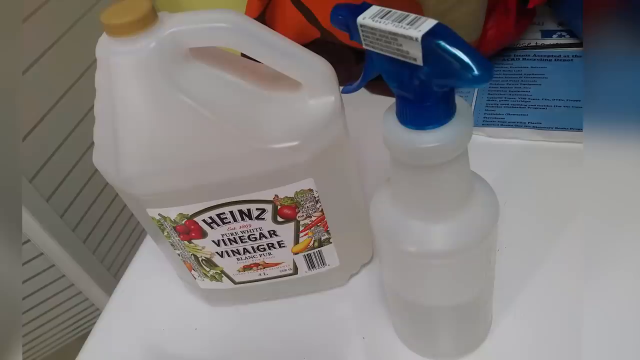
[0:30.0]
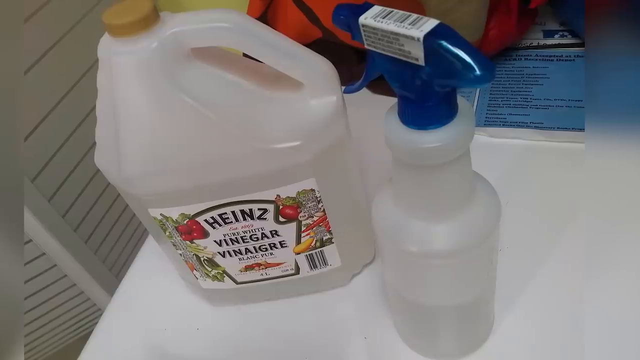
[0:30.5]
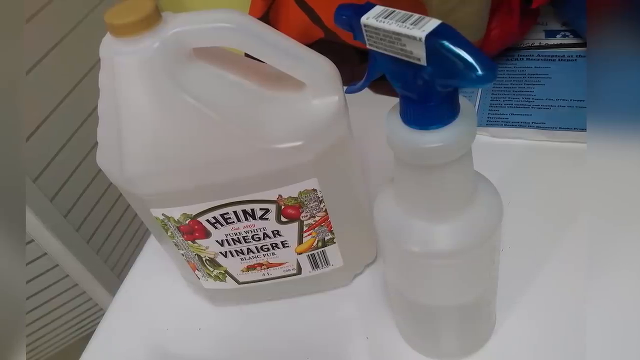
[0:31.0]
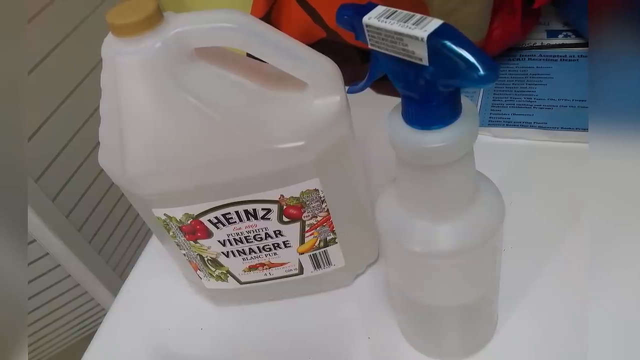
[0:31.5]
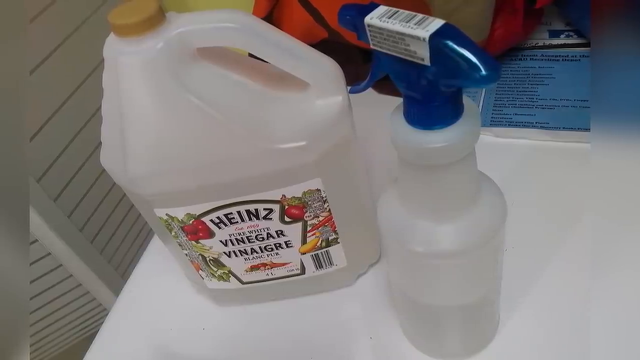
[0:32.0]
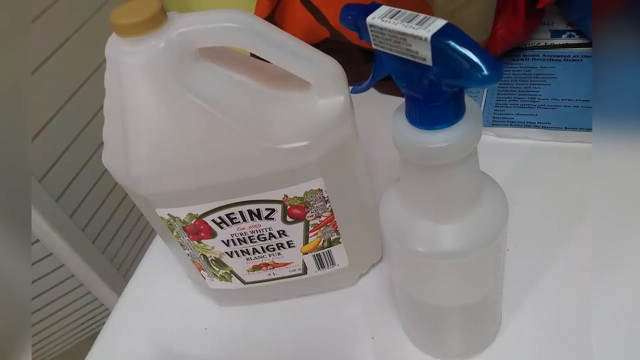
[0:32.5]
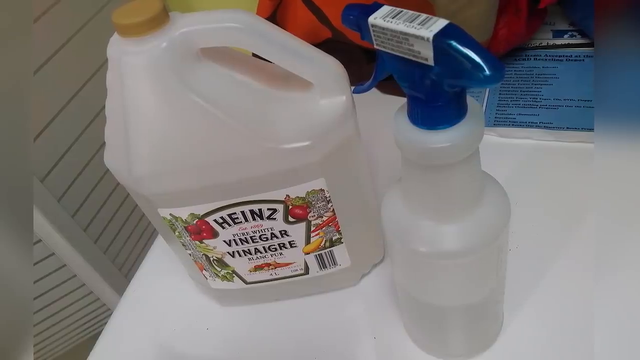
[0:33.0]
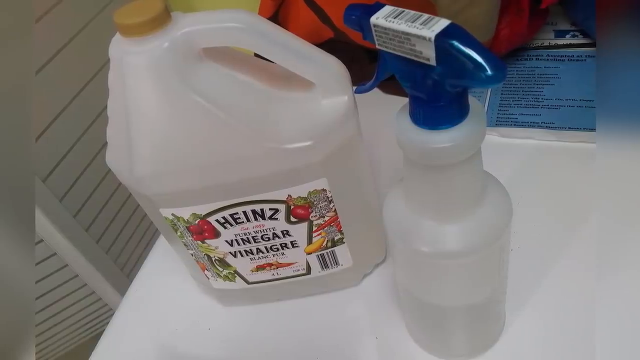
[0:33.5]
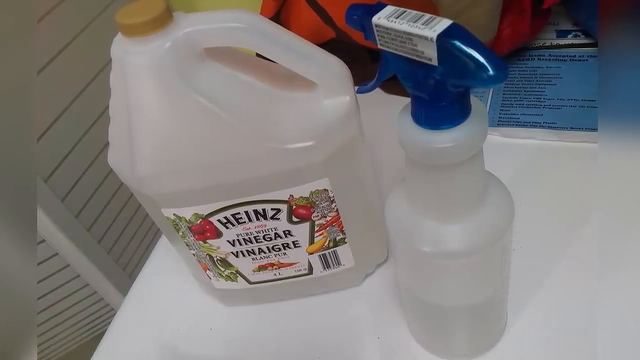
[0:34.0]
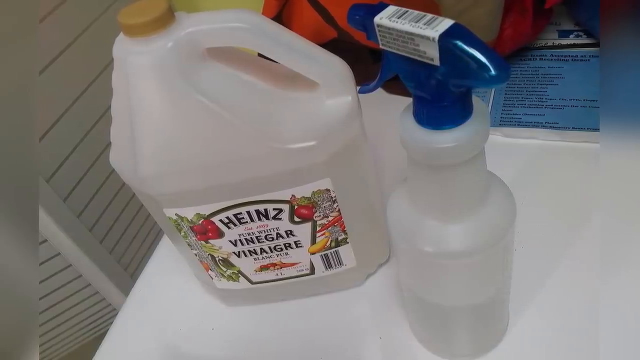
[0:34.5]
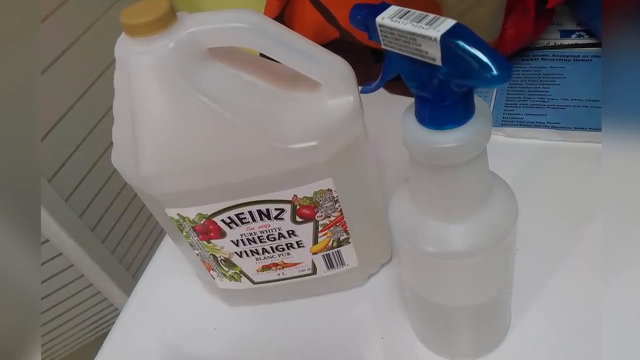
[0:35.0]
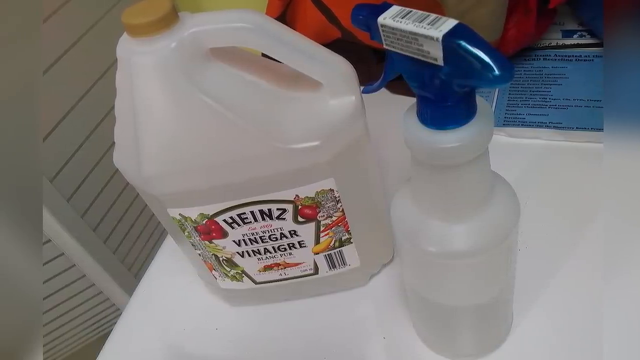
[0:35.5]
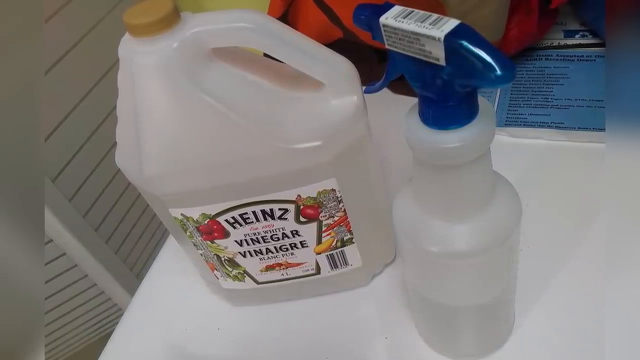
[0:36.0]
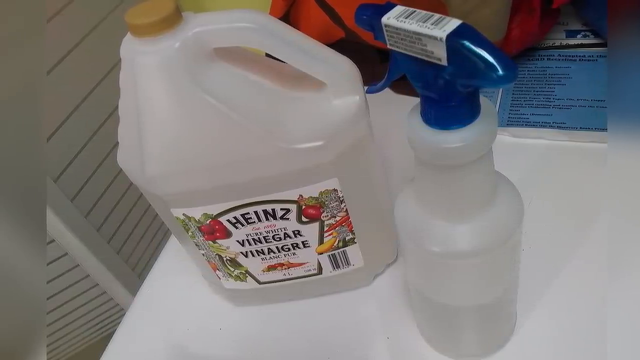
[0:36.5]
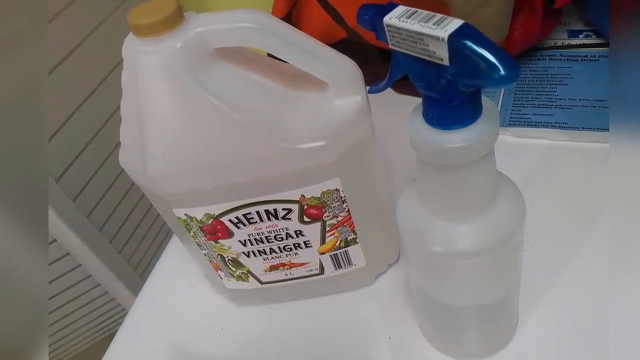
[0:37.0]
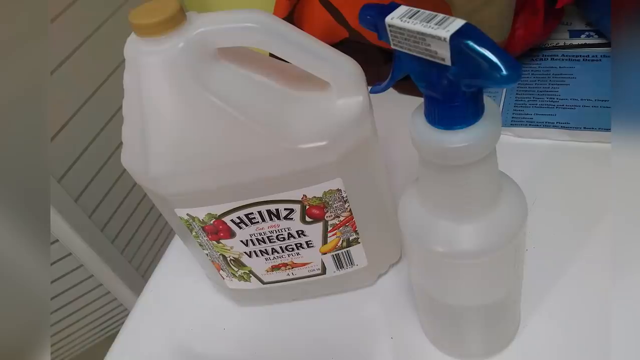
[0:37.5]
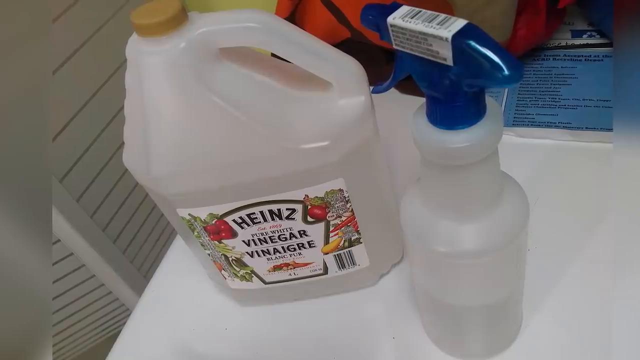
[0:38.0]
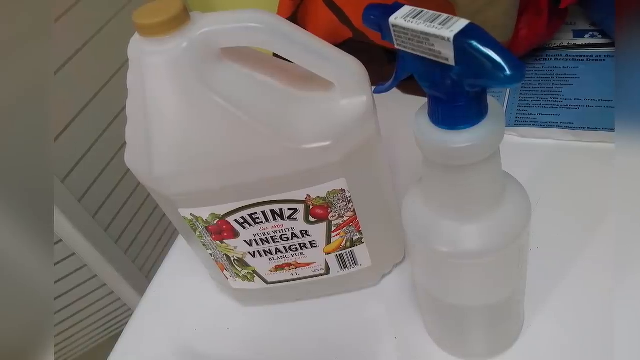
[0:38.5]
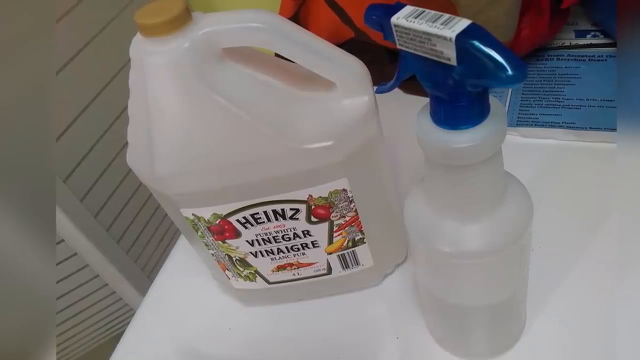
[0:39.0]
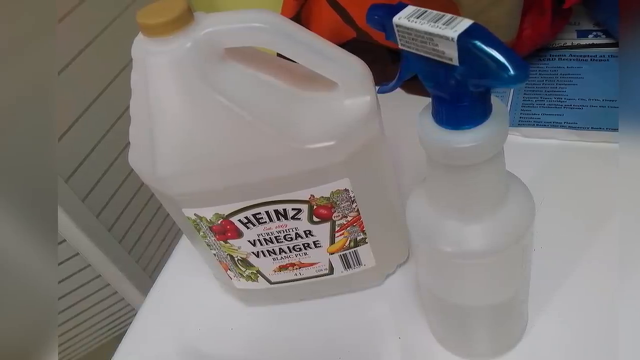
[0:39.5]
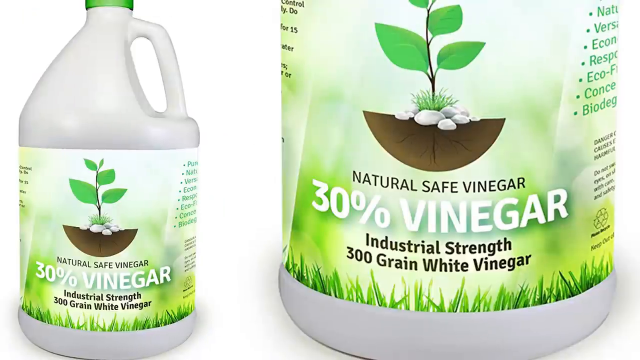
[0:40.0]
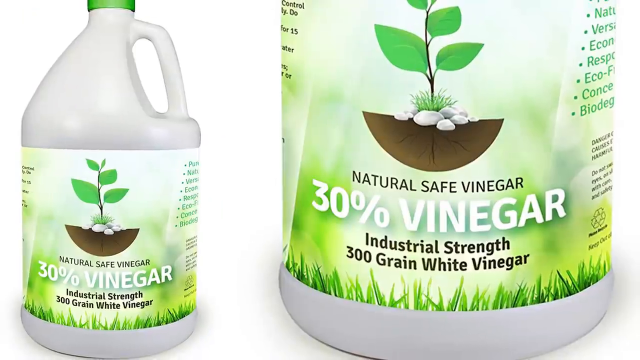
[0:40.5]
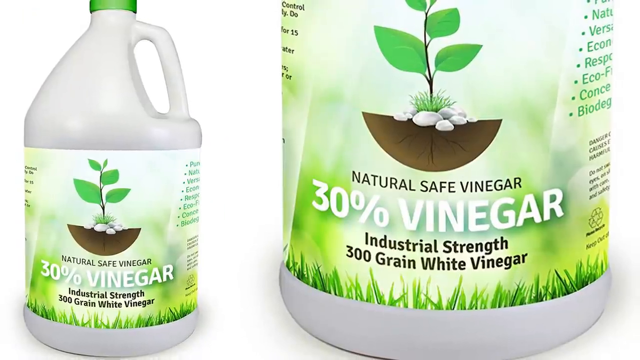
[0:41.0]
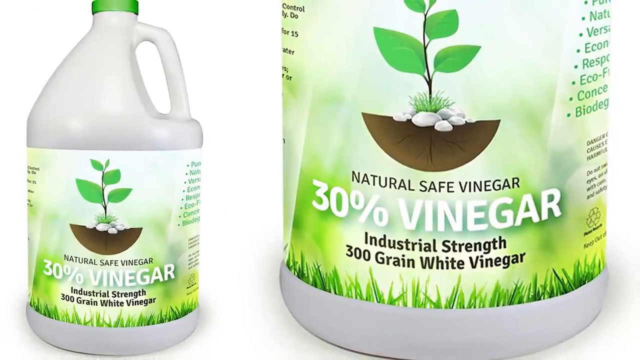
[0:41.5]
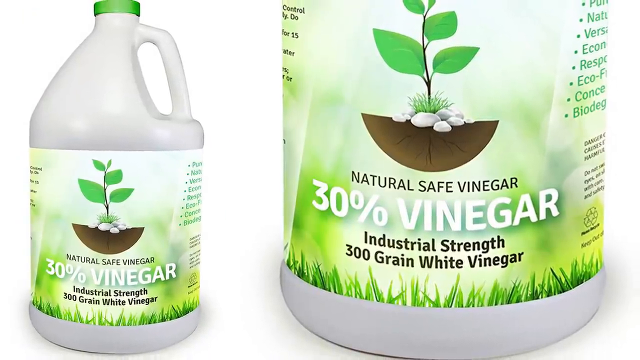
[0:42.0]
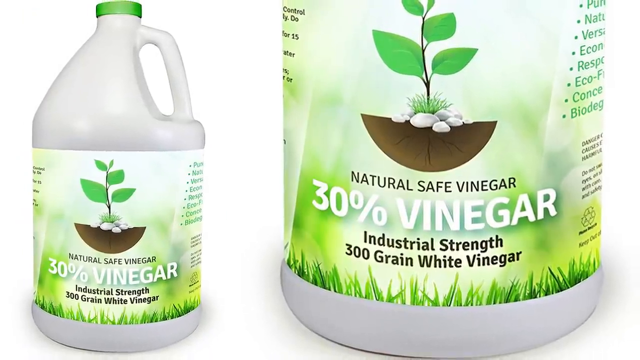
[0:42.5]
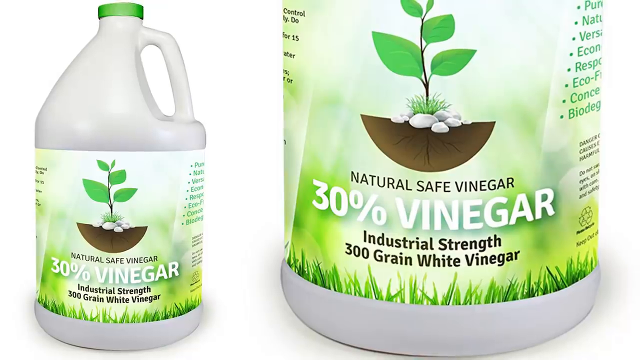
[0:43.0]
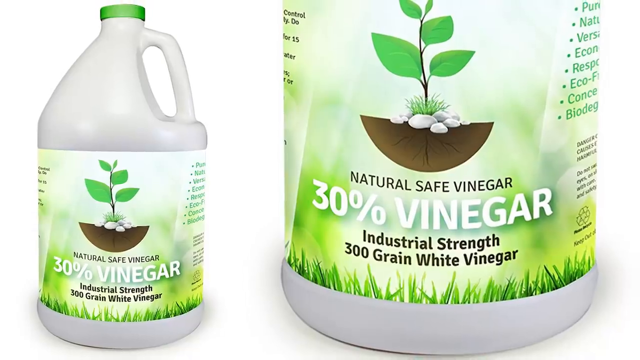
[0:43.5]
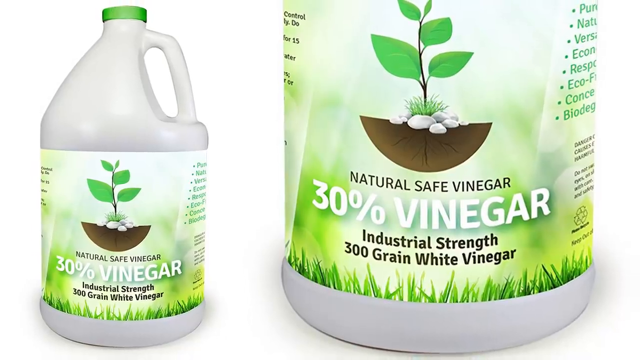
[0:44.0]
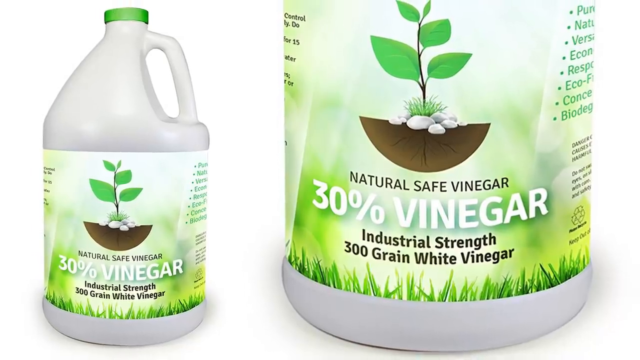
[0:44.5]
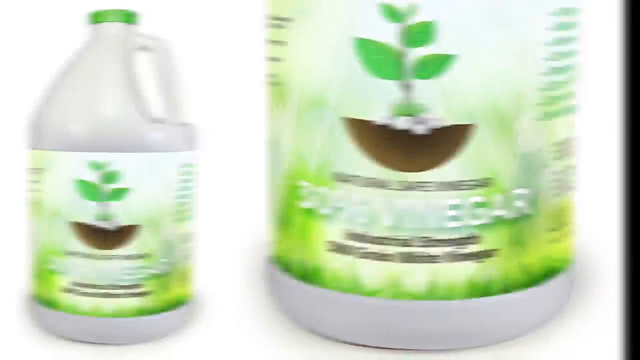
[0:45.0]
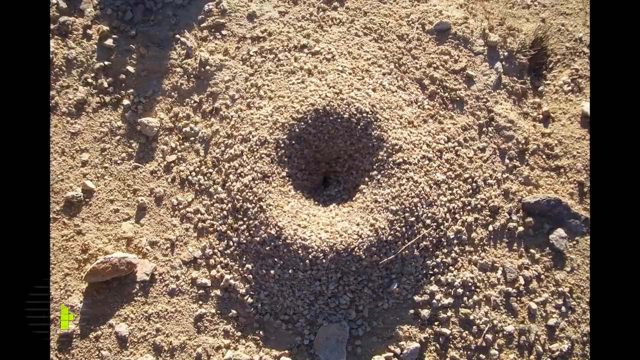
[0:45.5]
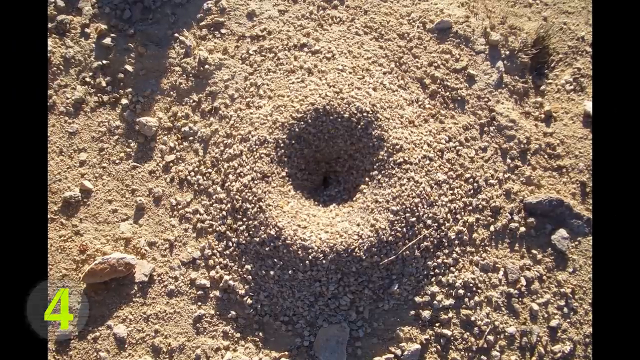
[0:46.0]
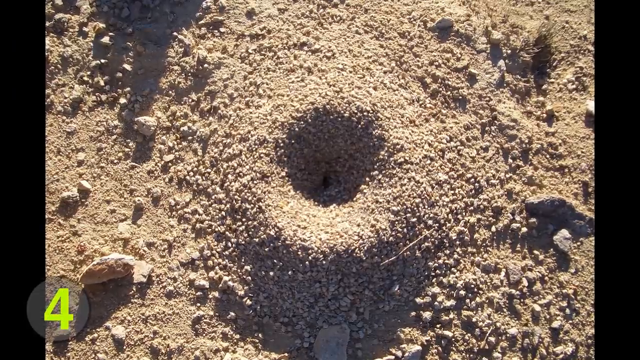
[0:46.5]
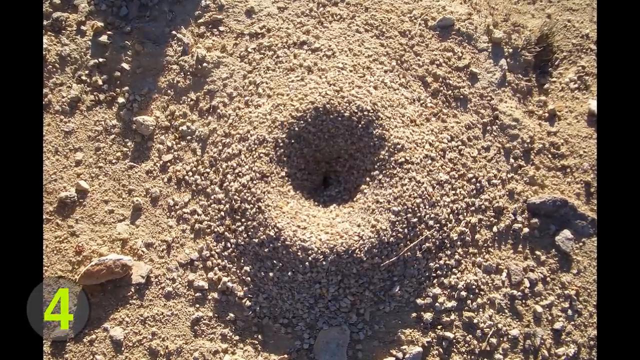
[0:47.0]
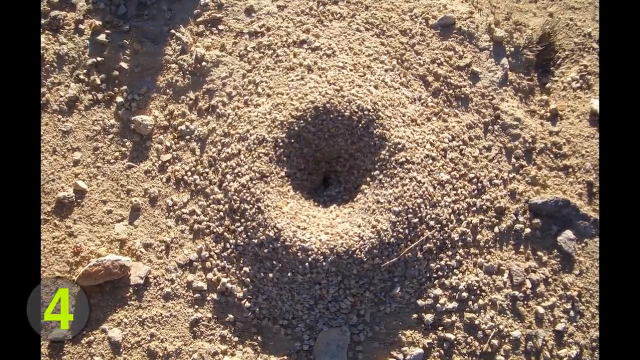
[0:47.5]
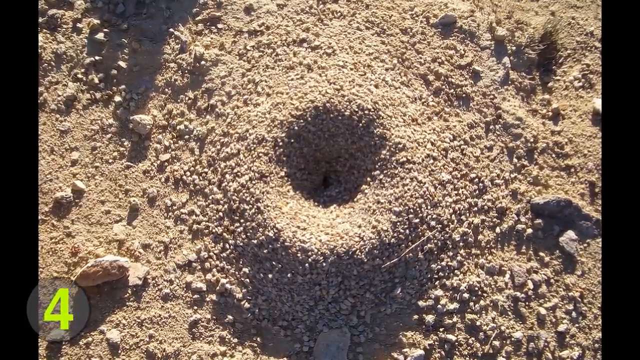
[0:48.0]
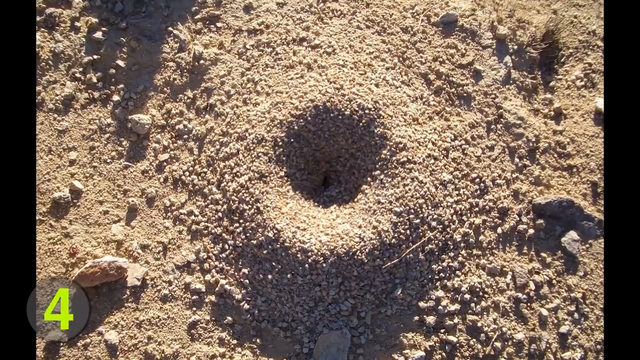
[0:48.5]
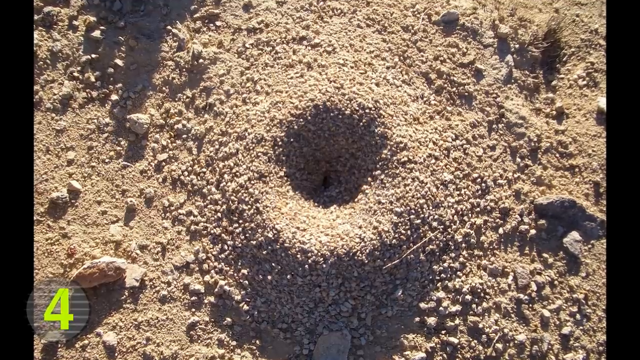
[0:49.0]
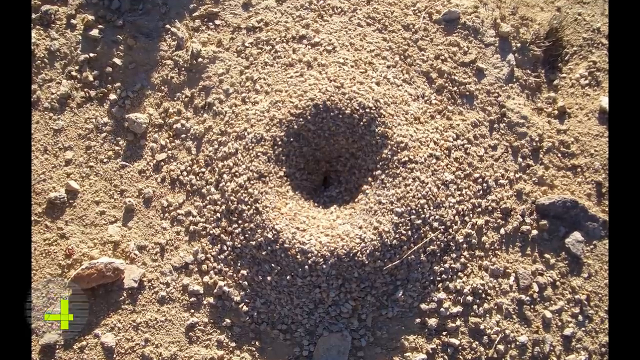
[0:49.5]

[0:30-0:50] What appears to be a see-through Heinz pure white vinegar bottle looks to be placed on top of a washing machine. Next to it is a spray bottle with a blue top, and there looks to be a sticker with a barcode on it. The shot changes to a white bottle reading "Natural Safe Water Vinegar," with a cap that appears to be green. It bears an image of a green plant with soil at the bottom and white rocks around the plant. Large white text reads "30% Vinegar," with "Industrial Strength 300 Green White Vinegar" below it, and green grass is at the bottom of the image. The shot then cuts to an image of sand: it looks to be a pile of sand with a hole at its center, which someone appears to have dug.